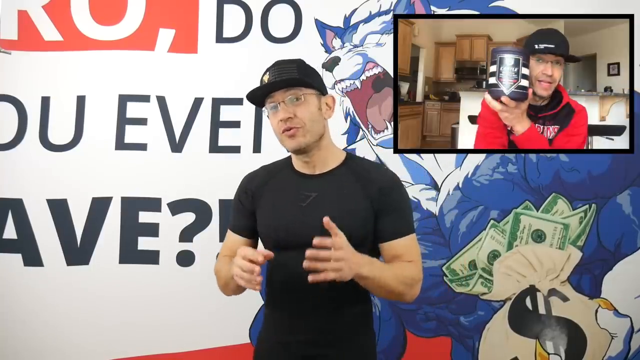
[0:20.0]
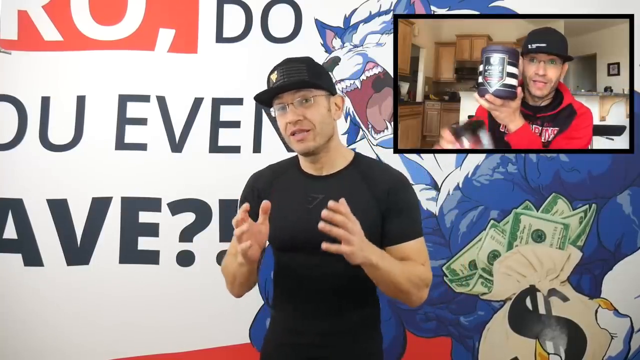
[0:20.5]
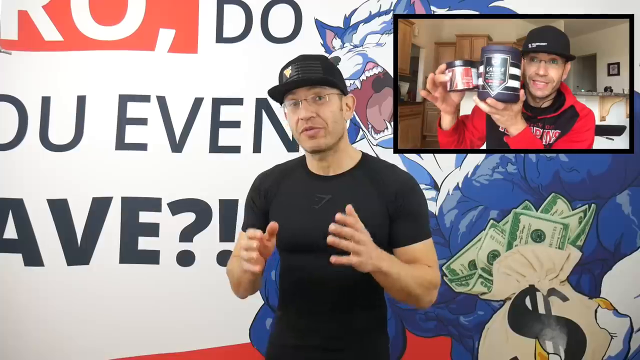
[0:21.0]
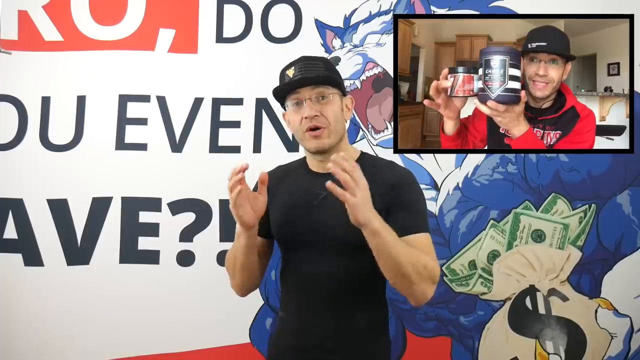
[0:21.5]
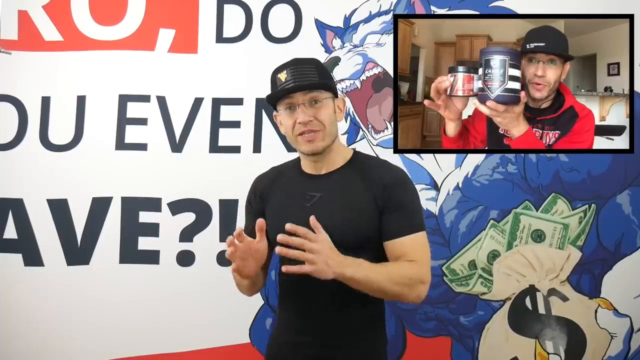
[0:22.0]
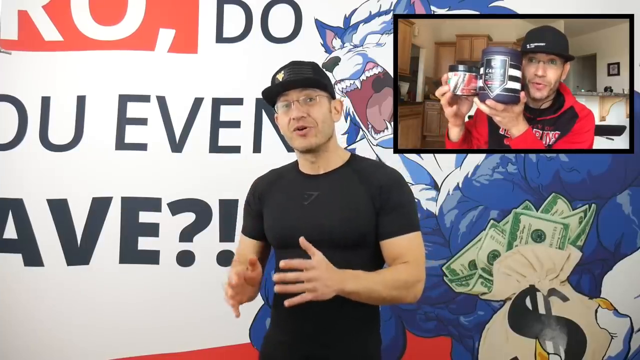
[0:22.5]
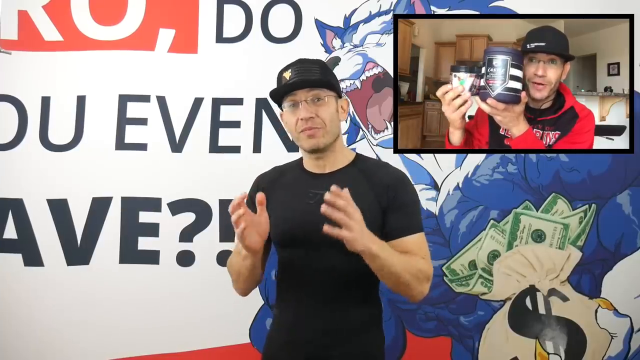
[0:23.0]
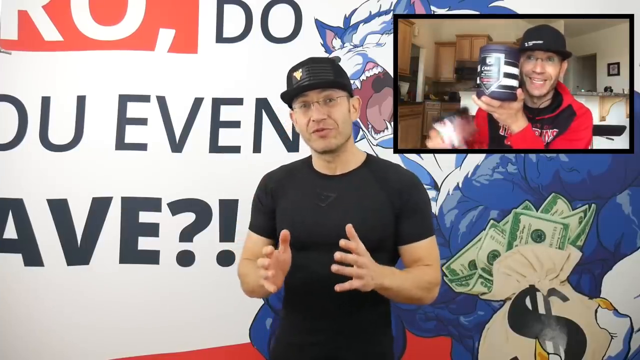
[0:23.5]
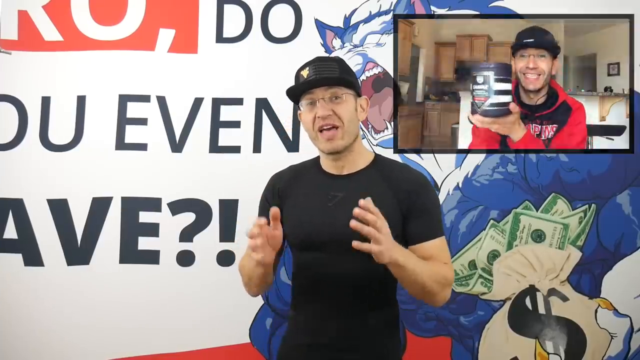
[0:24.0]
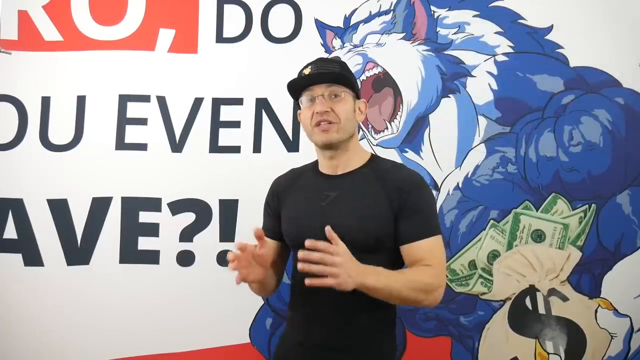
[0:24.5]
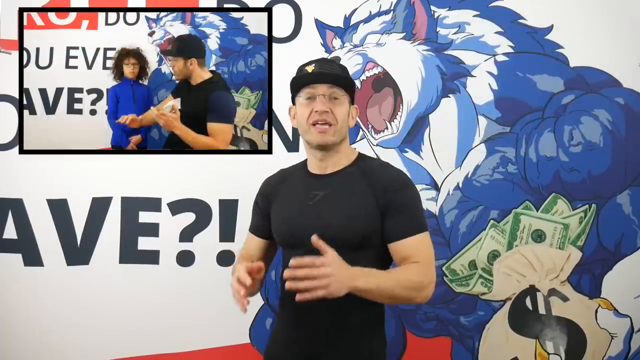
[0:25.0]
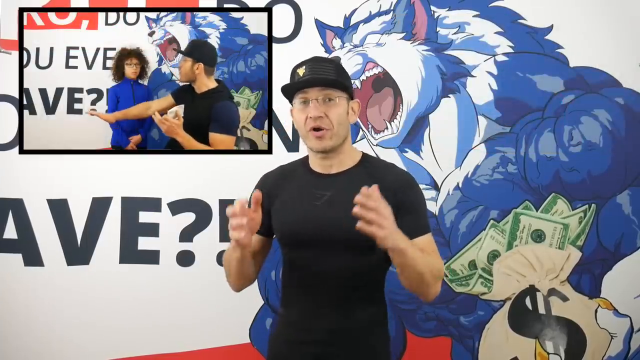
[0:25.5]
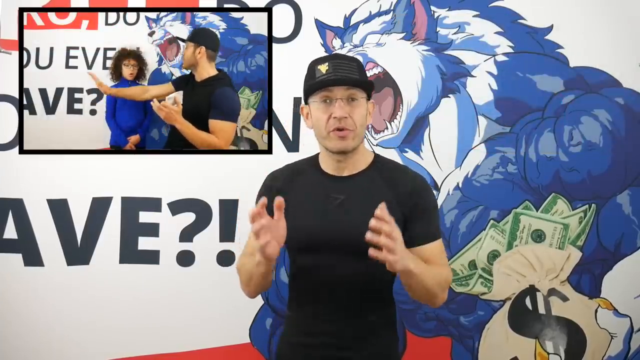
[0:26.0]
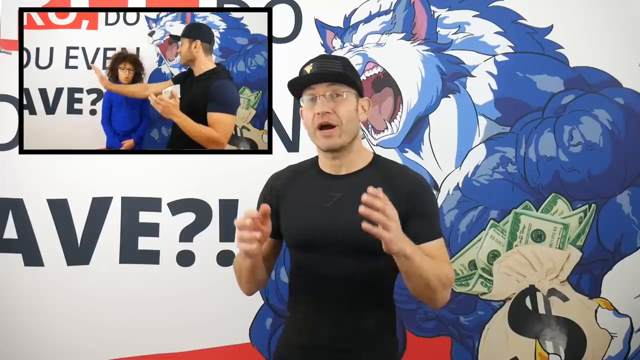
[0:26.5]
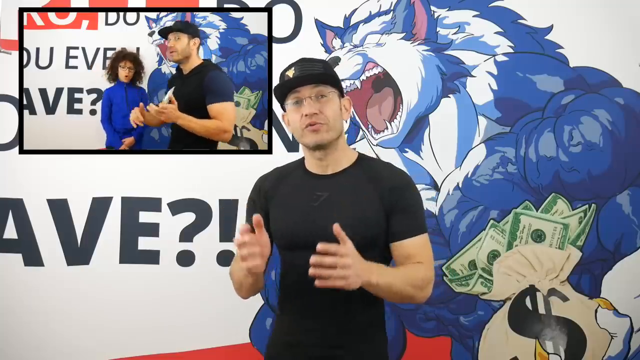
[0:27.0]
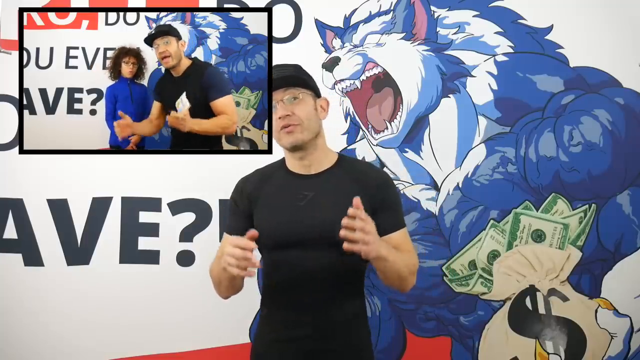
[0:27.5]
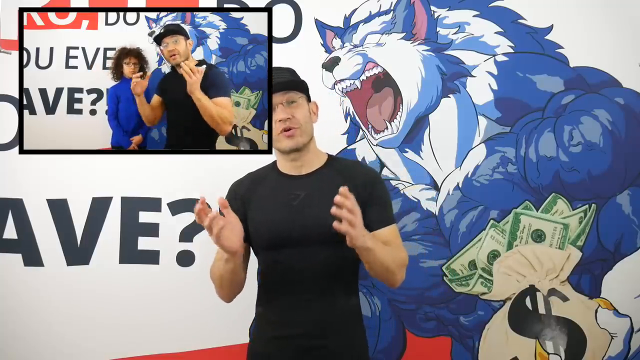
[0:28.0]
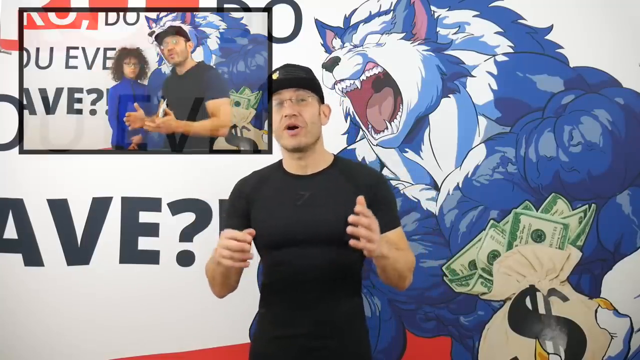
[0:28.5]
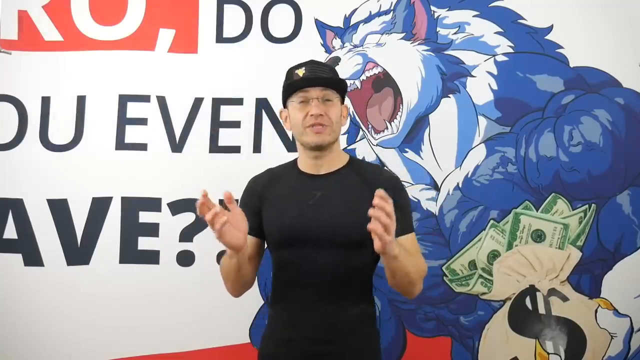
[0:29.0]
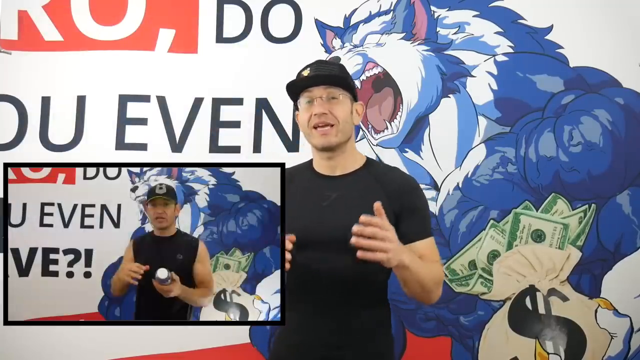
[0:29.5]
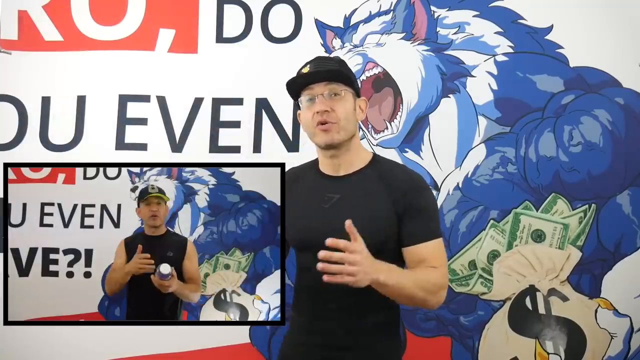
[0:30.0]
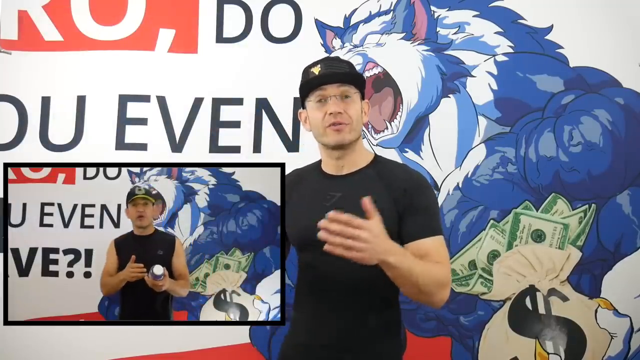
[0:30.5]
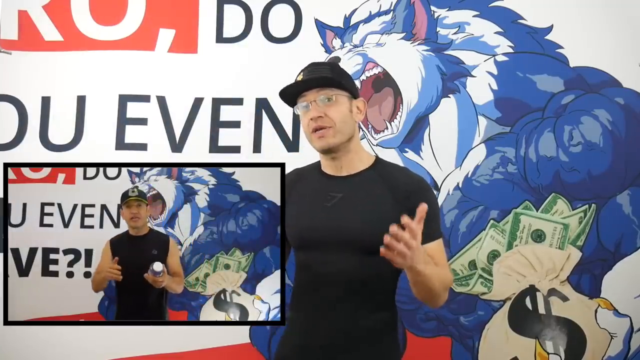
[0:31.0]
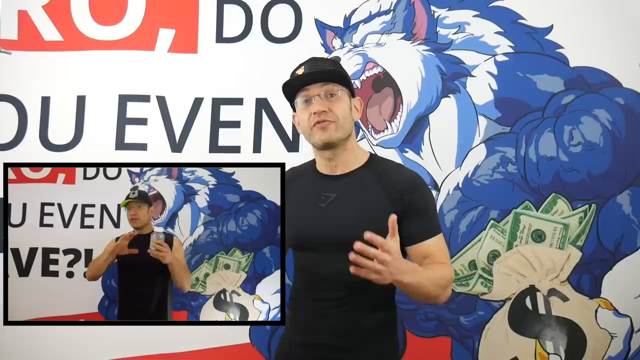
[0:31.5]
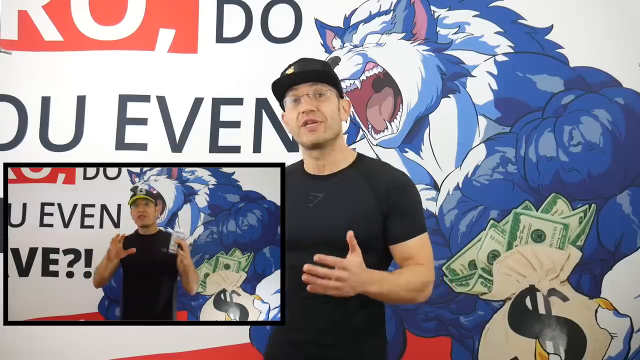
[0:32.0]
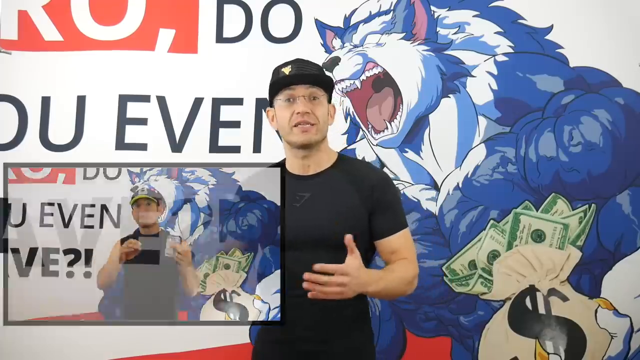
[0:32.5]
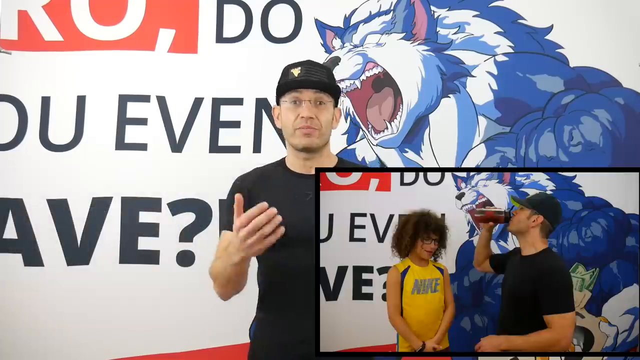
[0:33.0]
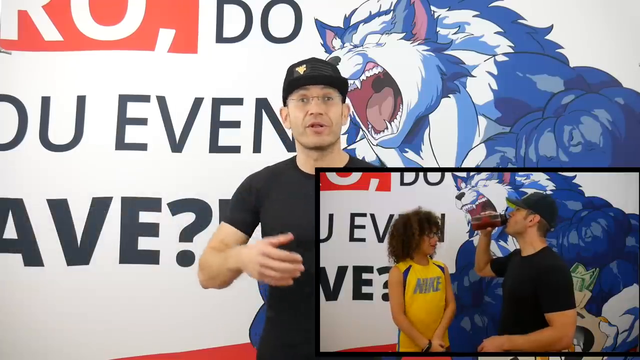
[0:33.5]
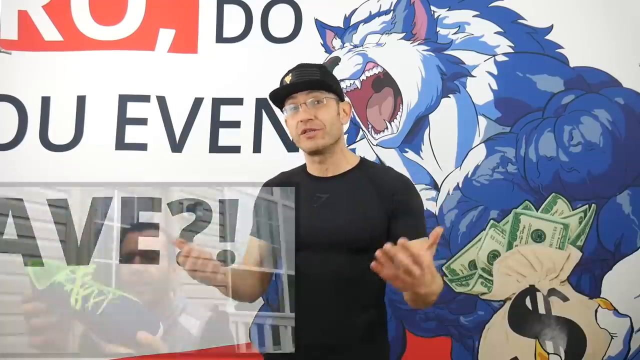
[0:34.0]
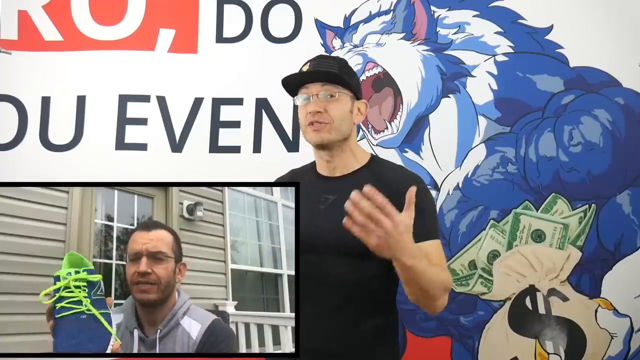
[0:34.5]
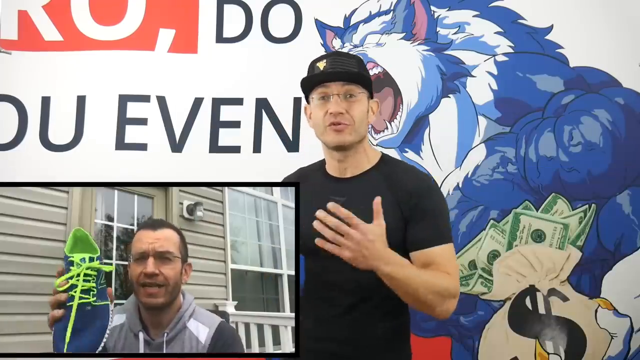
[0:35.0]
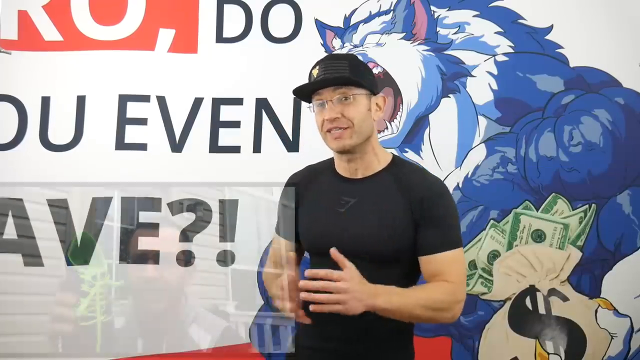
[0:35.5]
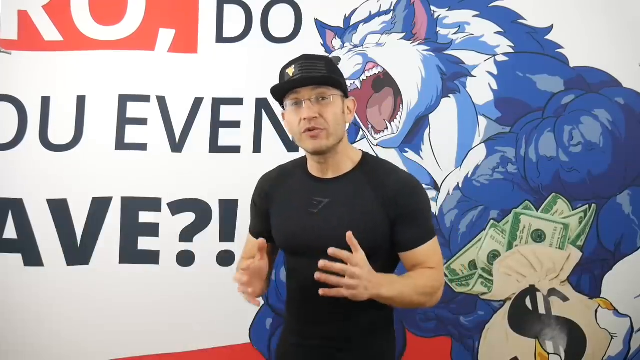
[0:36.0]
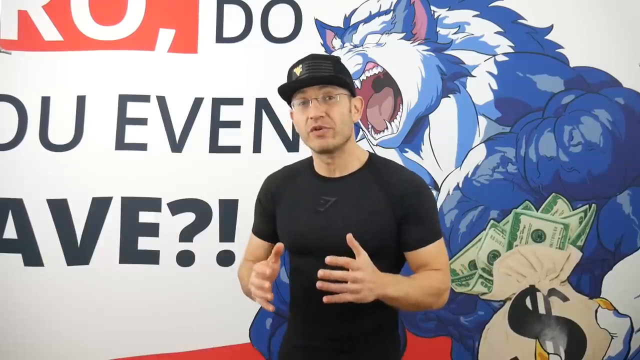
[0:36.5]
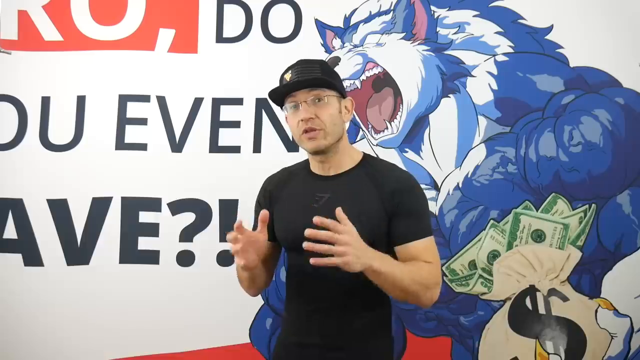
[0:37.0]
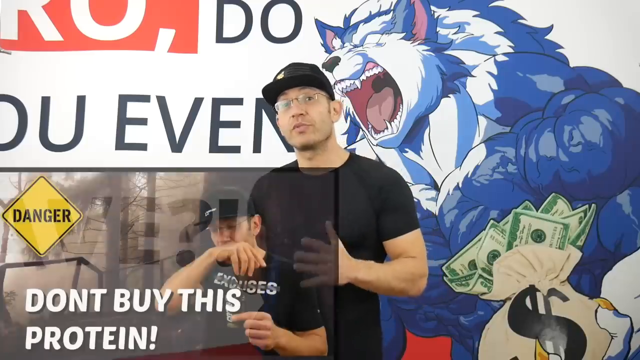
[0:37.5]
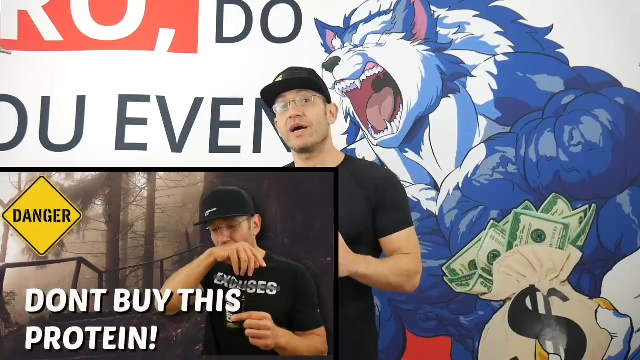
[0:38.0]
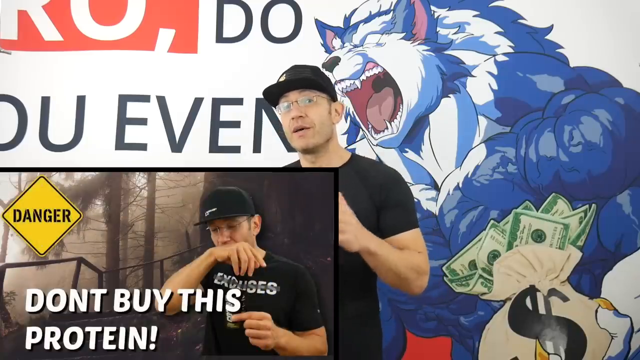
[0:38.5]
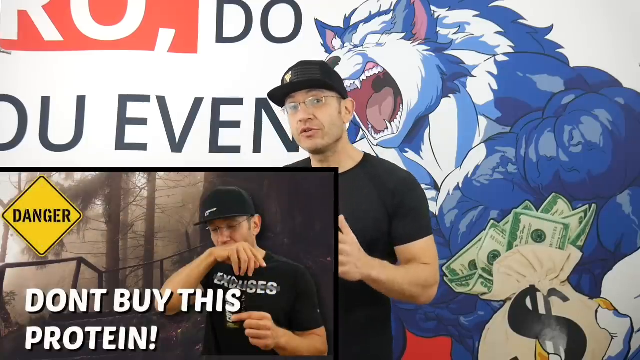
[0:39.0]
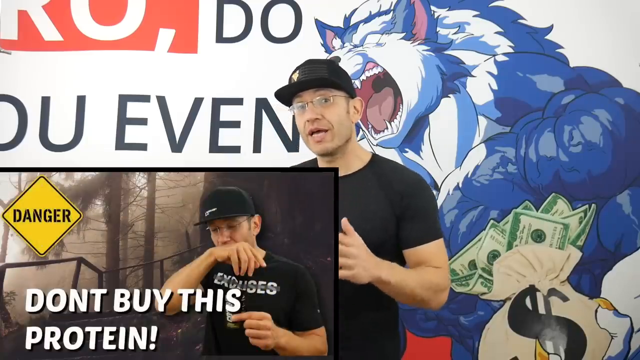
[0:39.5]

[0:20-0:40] A man in a black t-shirt and black hat stands in front of a backdrop with writing on its left side, most of it obscured or cut off from the camera. On the right side is an image that looks like a very buff, muscular human-like wolf. It is growling, blue and white, and appears to be holding a bag of money in its left hand. A smaller video box appears in the upper right corner of the screen showing the same man in what looks like a house, holding up two jars in front of the camera, a large black one and a smaller black one; they look like protein powder or supplement jars. Another video box appears in the upper left corner, showing the man in front of the same backdrop standing next to a young girl in a bright blue shirt, who watches him as he speaks and gestures. A third video box appears in the lower left corner, showing the same man in front of the same backdrop but in a different shirt, holding what appears to be a drink can in his left hand. Another video box appears in the lower right, showing him drinking something while the girl watches. Finally, one appears on the lower left showing him standing in front of a house holding a shoe in his right hand.